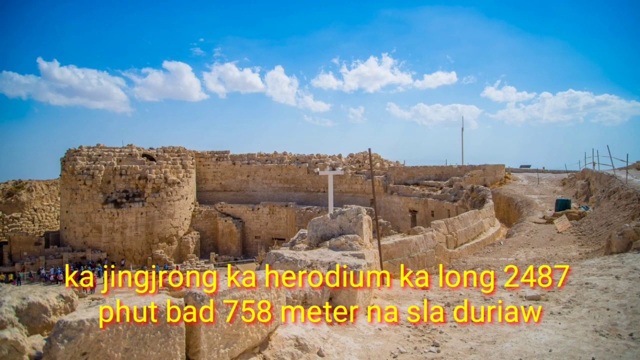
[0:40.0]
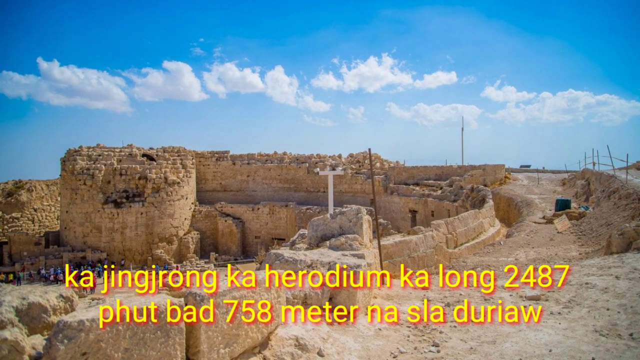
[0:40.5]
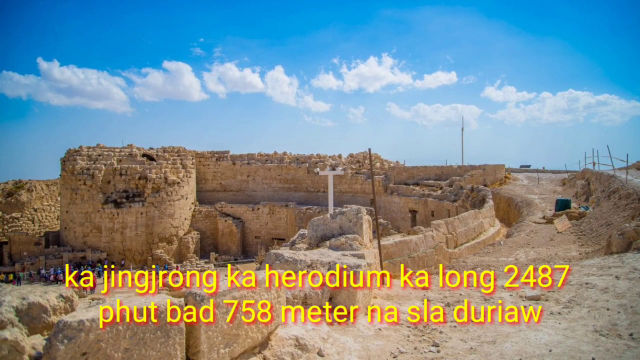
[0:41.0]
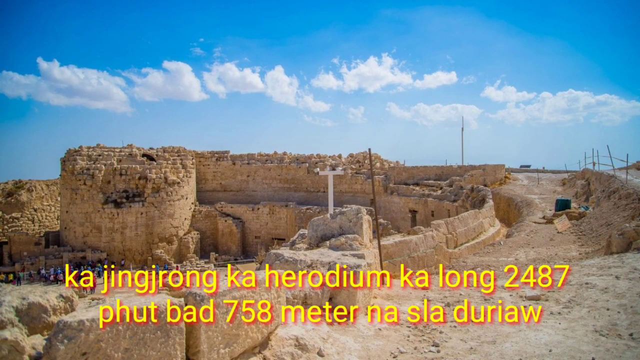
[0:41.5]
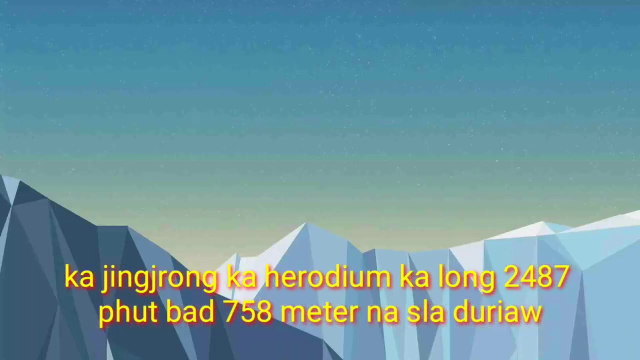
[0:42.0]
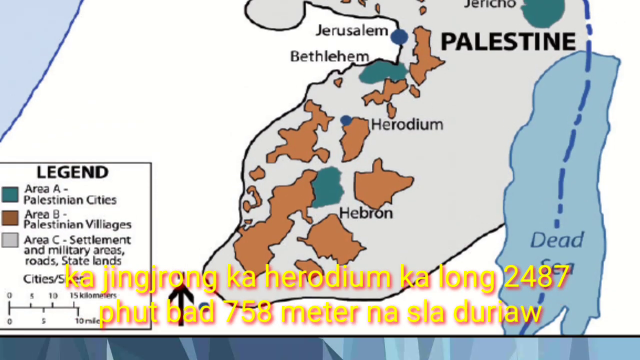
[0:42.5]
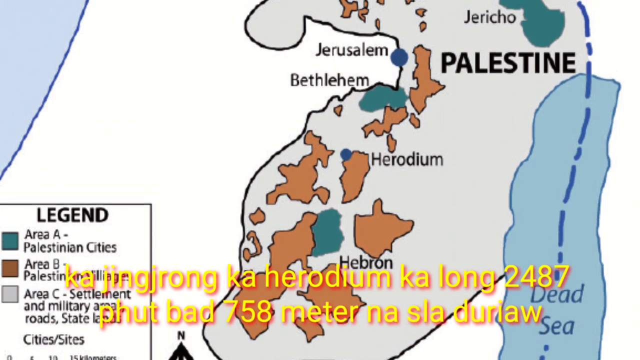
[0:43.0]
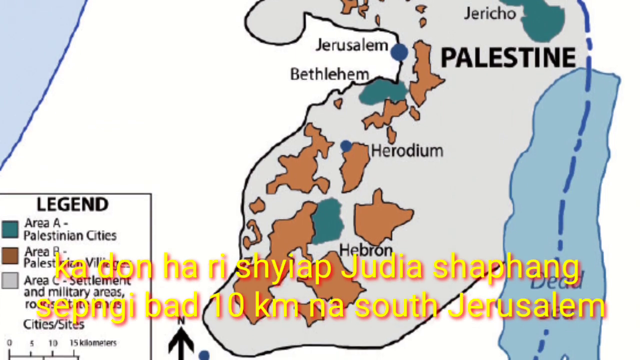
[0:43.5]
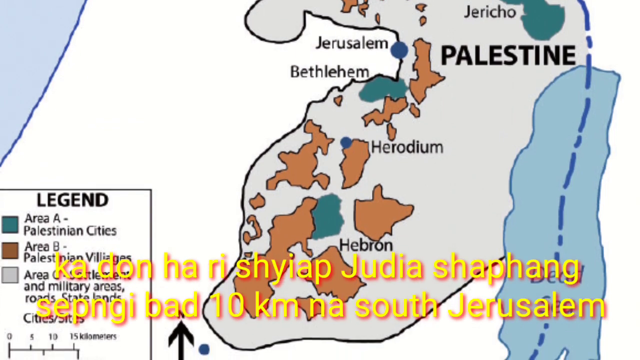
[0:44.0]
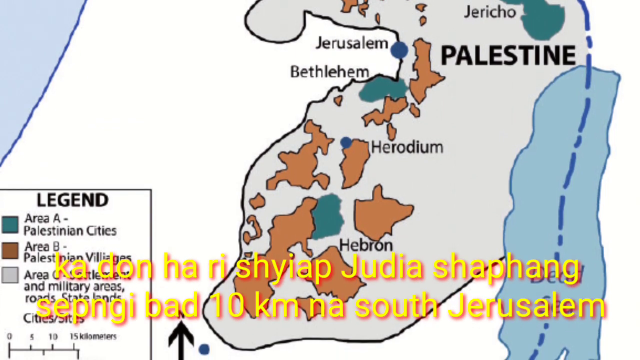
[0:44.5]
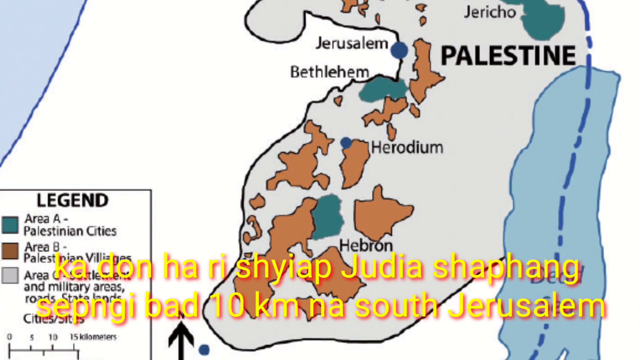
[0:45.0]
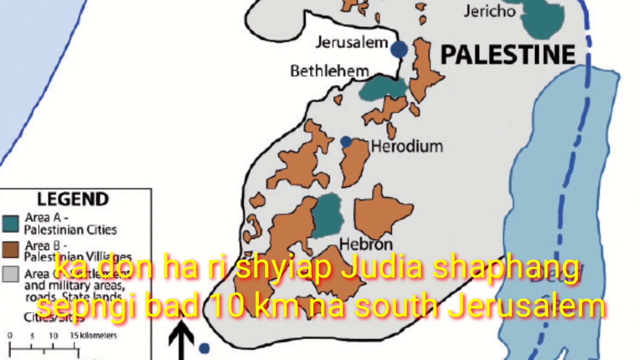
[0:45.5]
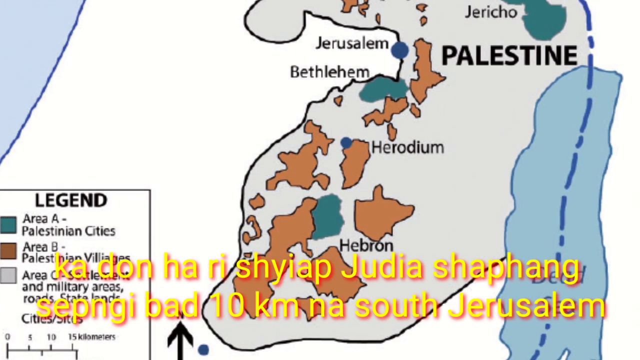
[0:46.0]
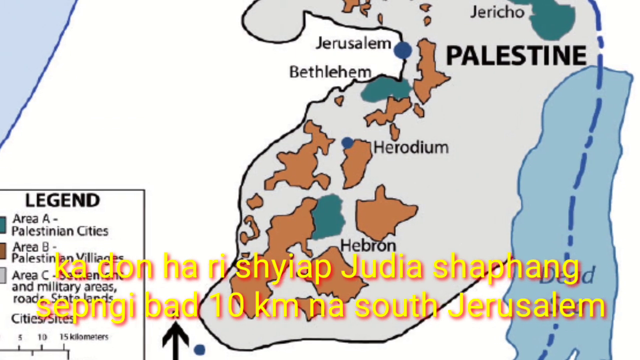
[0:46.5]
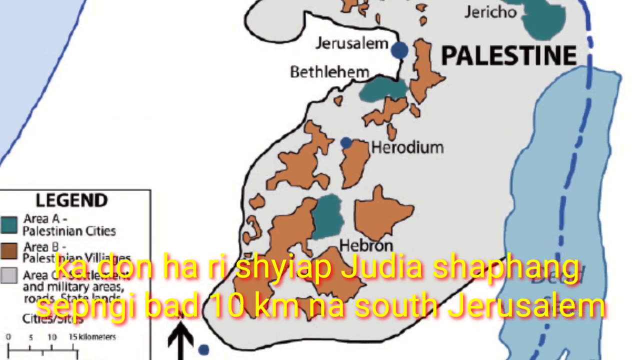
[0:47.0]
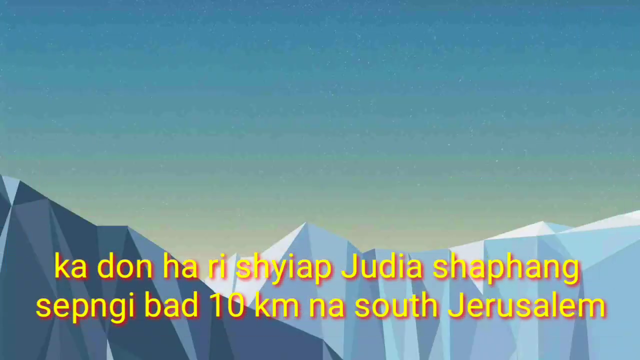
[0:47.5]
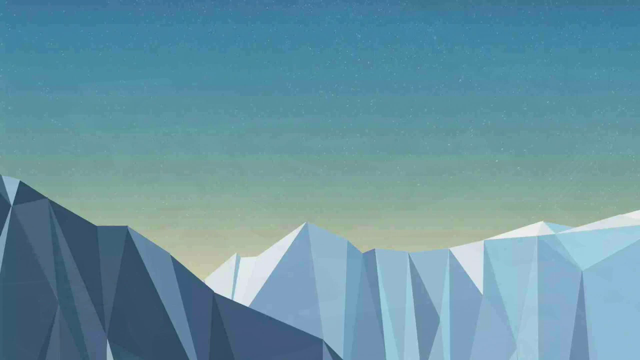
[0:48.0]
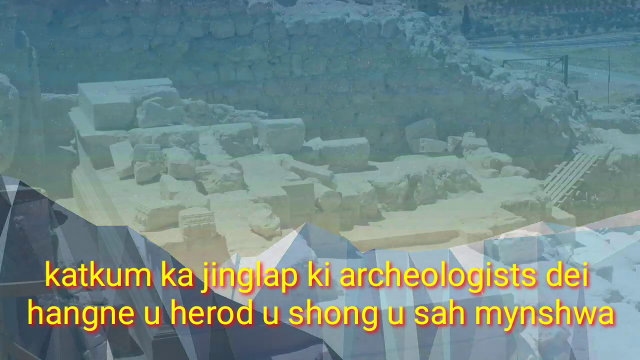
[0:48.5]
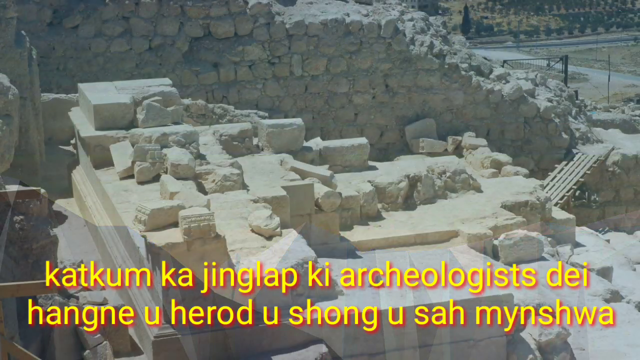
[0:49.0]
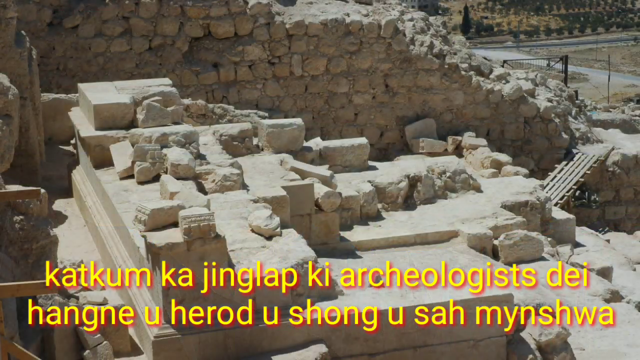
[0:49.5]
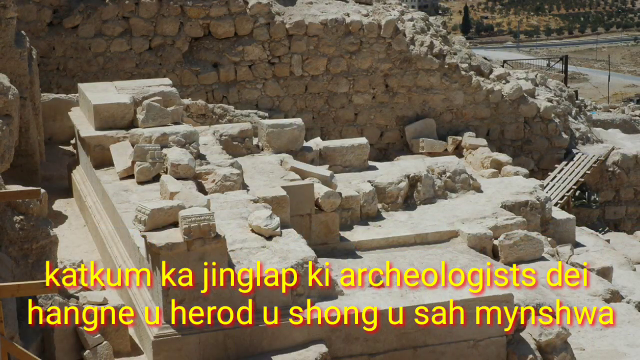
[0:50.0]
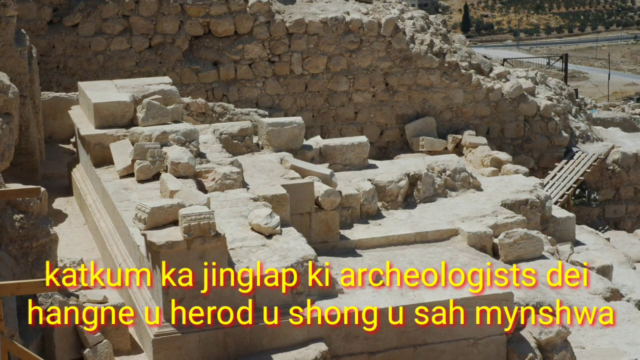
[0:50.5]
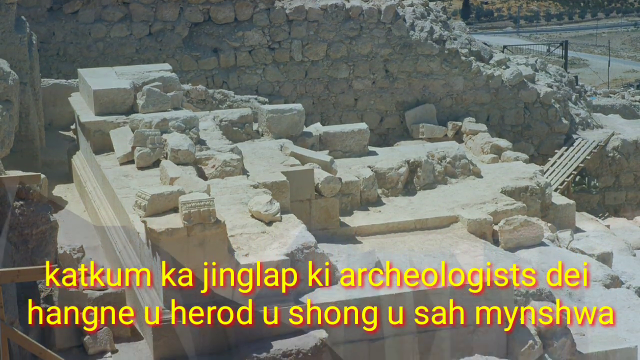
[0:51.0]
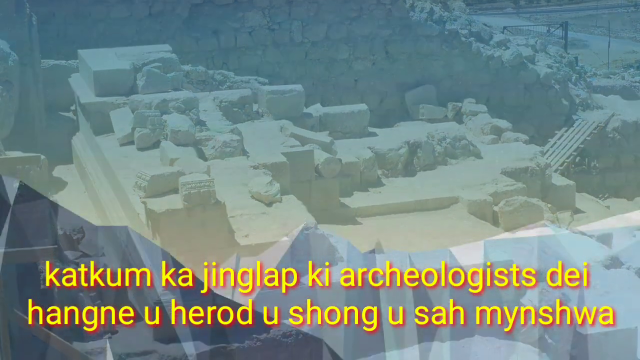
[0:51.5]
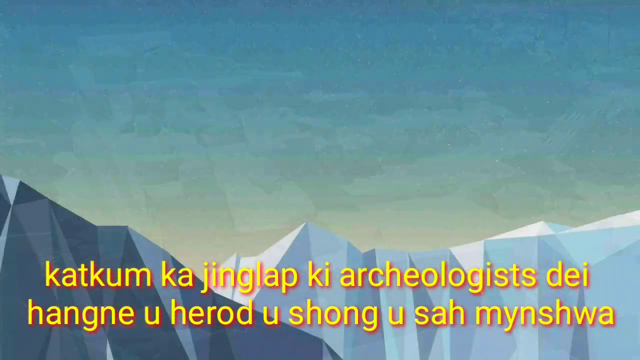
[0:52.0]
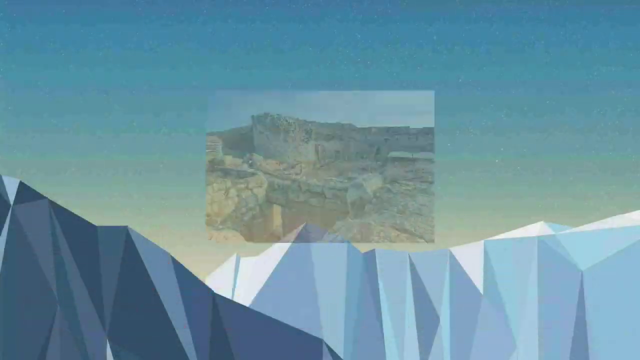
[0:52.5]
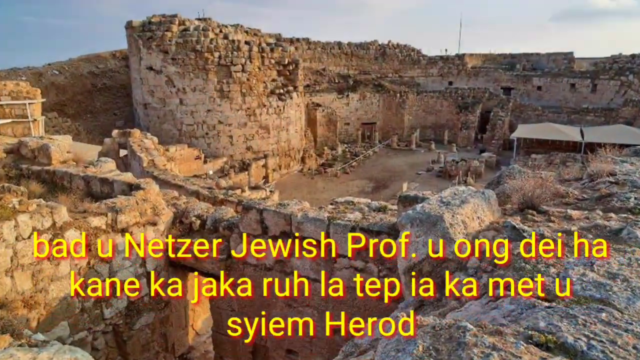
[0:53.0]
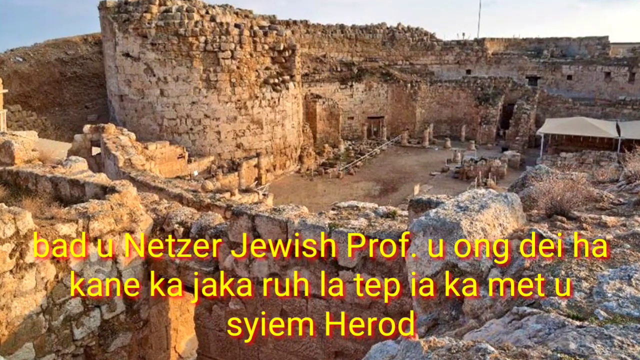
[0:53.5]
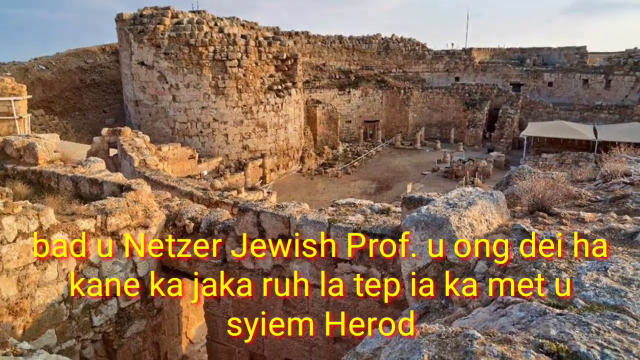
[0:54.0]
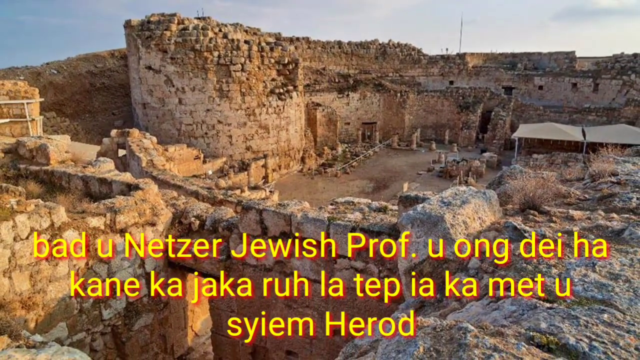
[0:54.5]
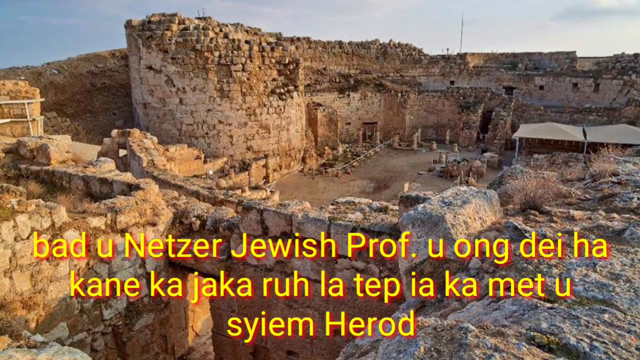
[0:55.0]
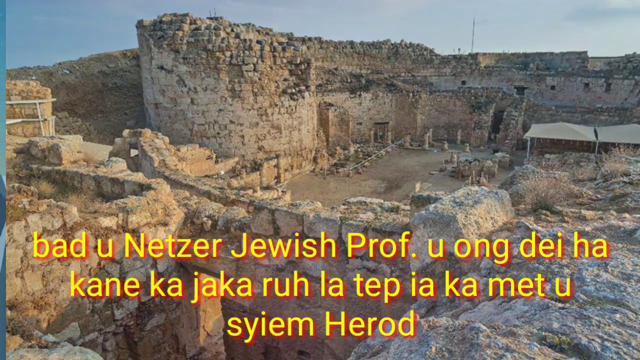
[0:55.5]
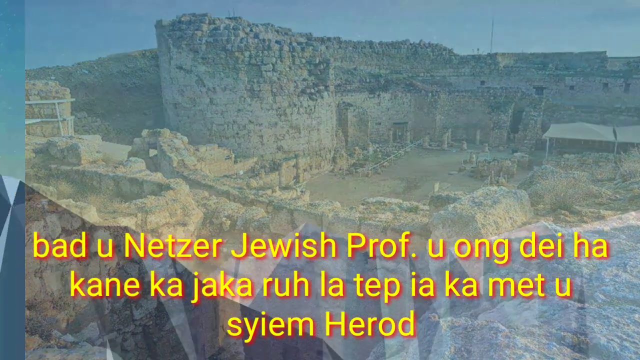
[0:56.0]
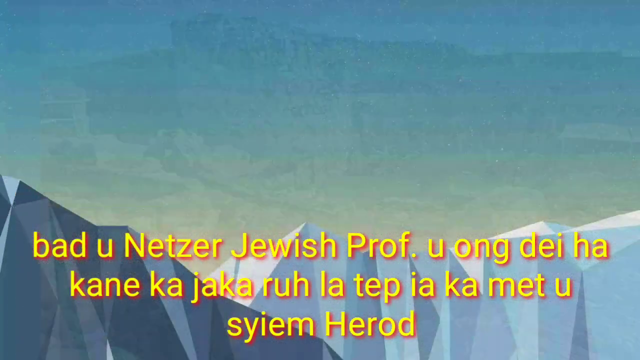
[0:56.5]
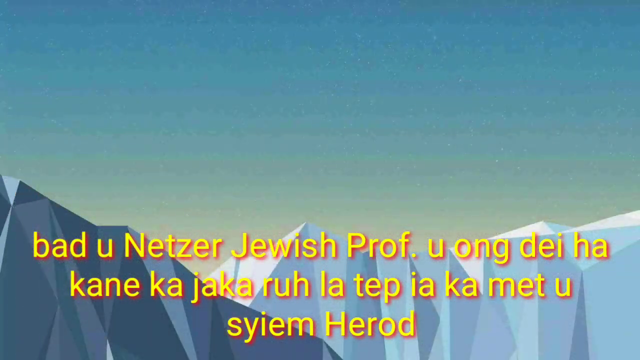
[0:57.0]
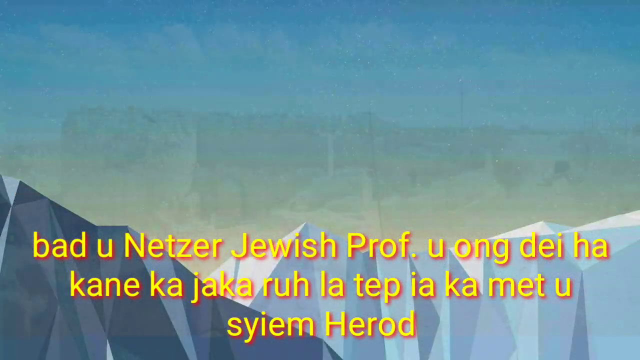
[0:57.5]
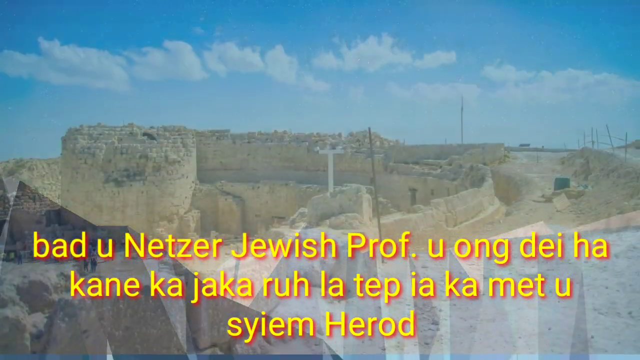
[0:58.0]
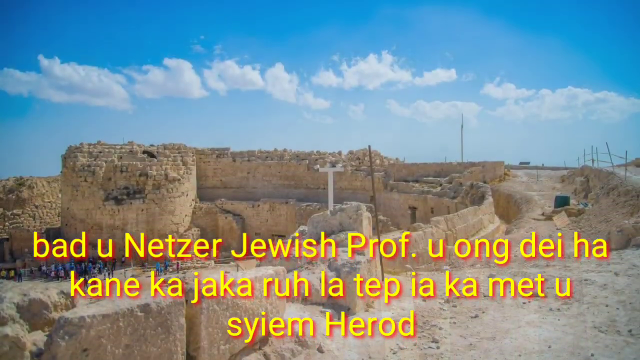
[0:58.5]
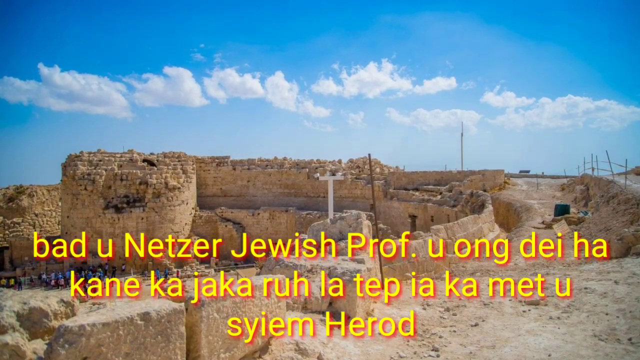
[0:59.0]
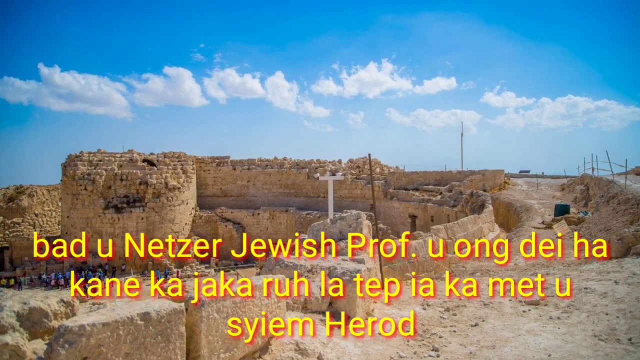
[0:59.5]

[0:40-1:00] A map of the Middle Eastern area appears, with "Palestine" as the largest text. Various cities are named, including Jericho, Jerusalem, Bethlehem, Herodium, and Hebron. A legend in the bottom left corner of the map shows the colors for the different areas: Area A, Palestinian cities, Area B, Palestinian villages, Area C, military areas, roads, and state land. The image is manipulated in several ways, such as stretching and weird transitions. An image of stone structures then appears for less than a second before fading away and being replaced by another image of stone structures, which also transitions away after less than a second, too quickly for the details to be seen.